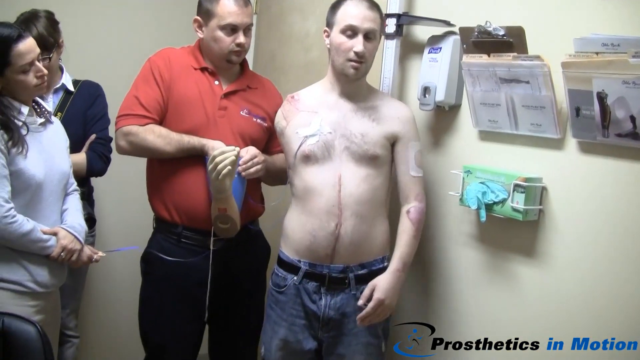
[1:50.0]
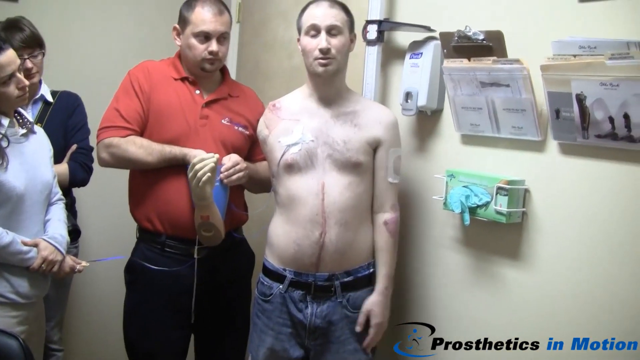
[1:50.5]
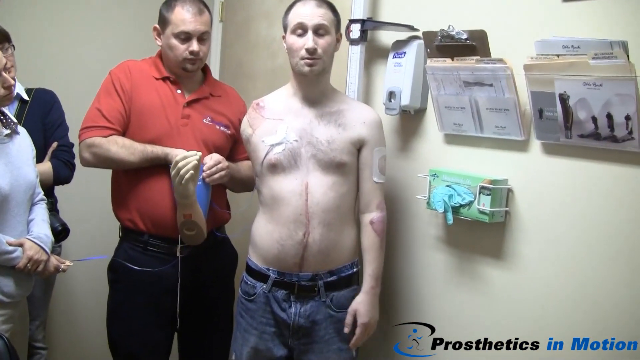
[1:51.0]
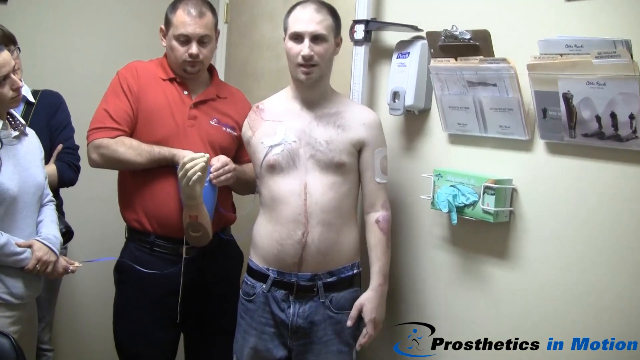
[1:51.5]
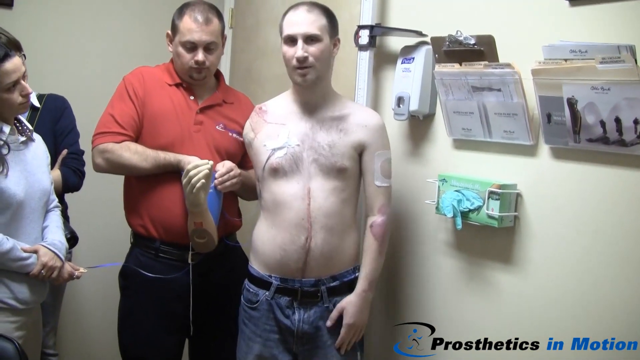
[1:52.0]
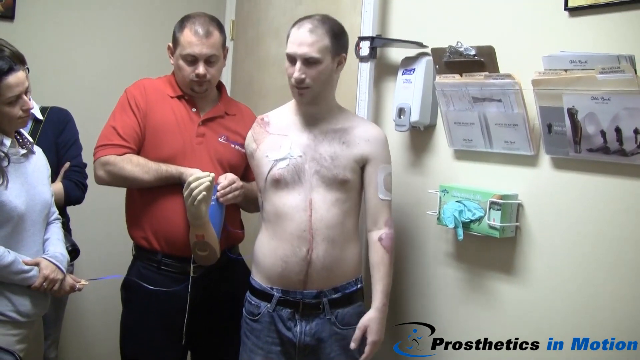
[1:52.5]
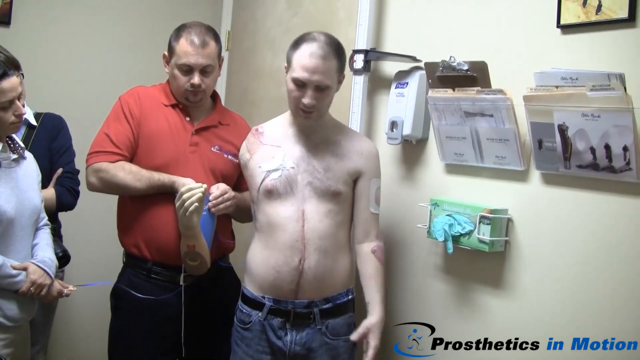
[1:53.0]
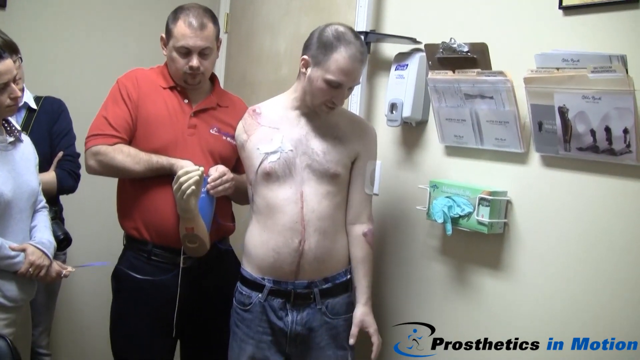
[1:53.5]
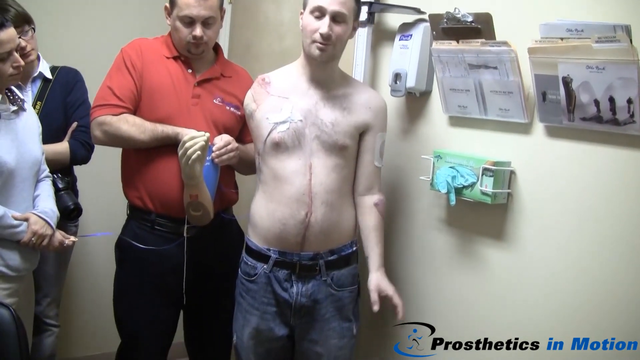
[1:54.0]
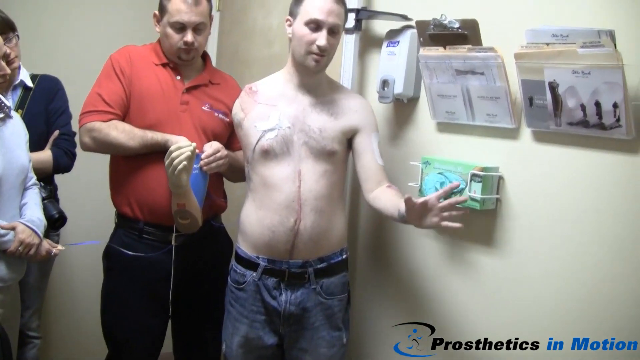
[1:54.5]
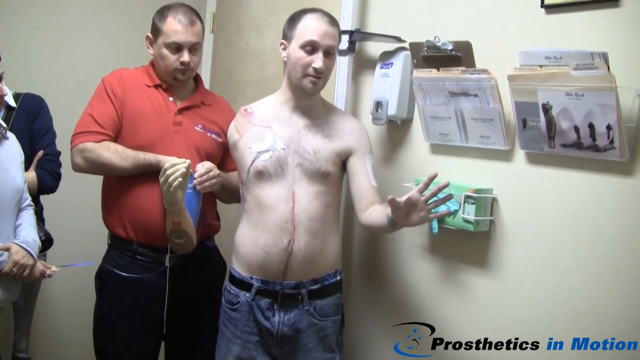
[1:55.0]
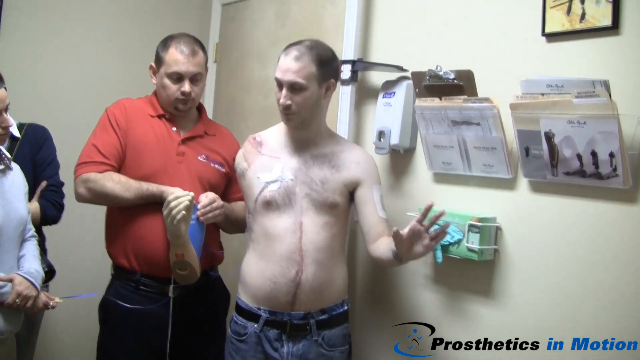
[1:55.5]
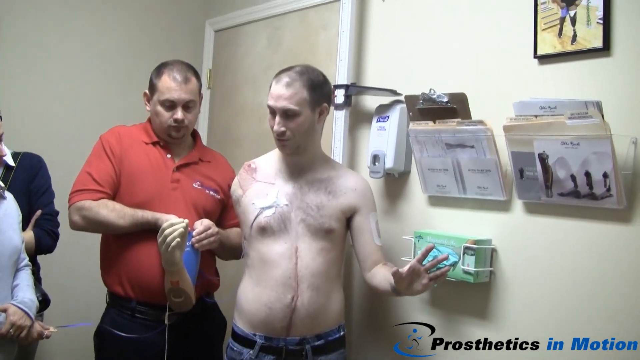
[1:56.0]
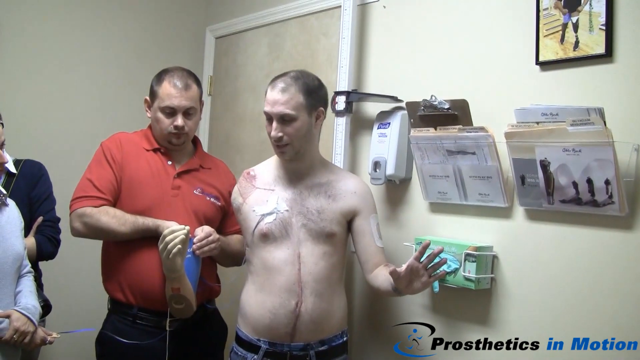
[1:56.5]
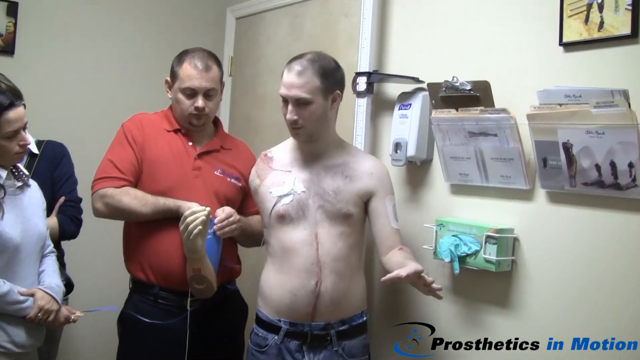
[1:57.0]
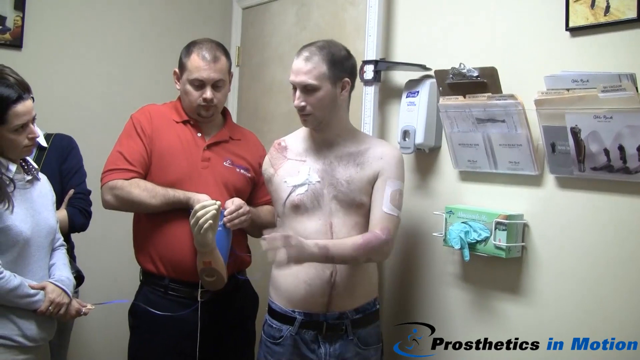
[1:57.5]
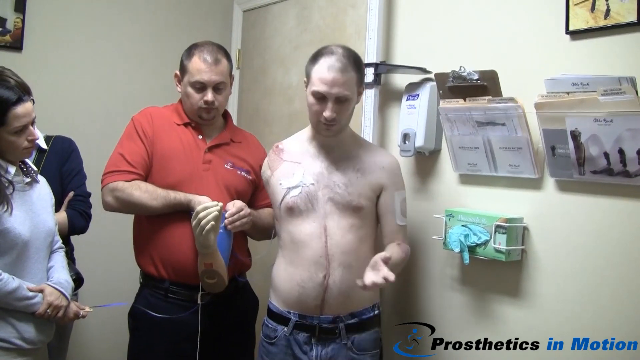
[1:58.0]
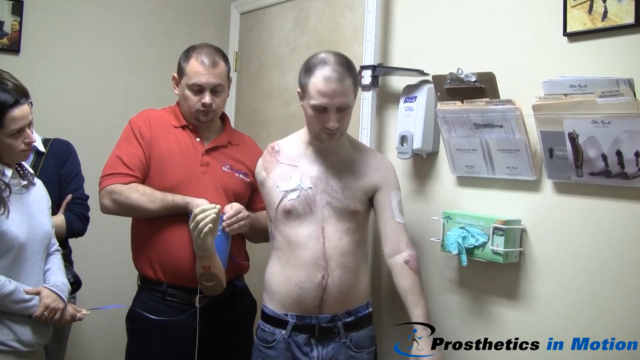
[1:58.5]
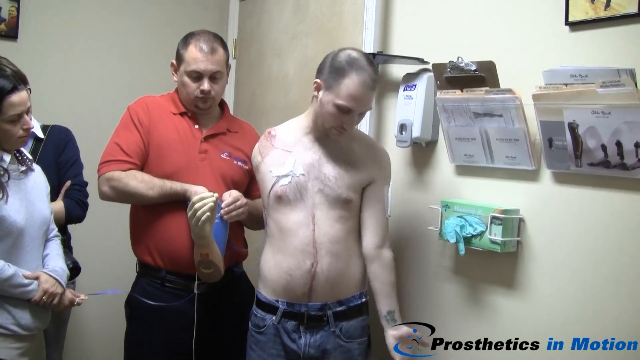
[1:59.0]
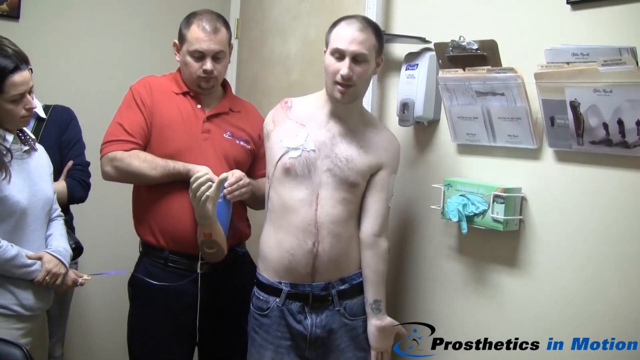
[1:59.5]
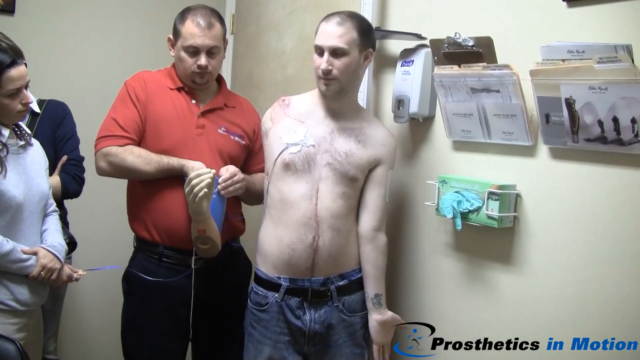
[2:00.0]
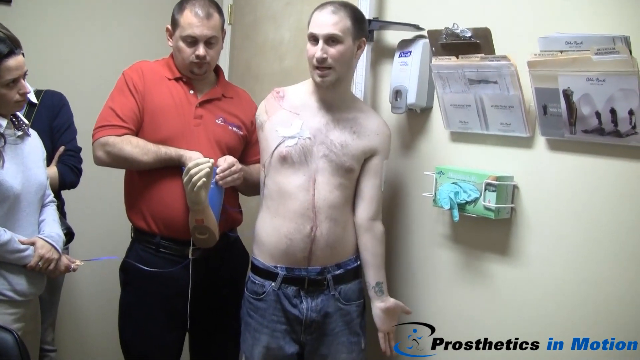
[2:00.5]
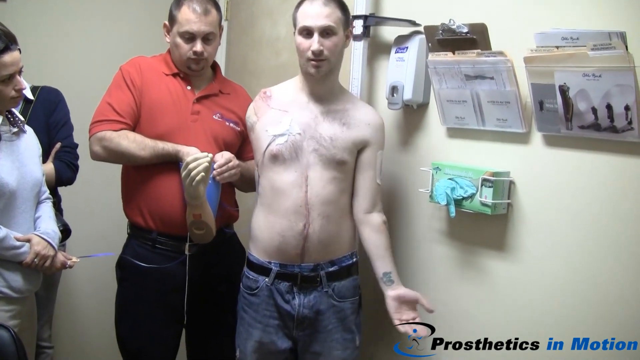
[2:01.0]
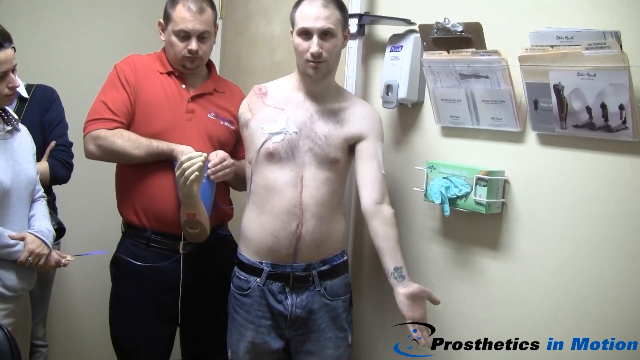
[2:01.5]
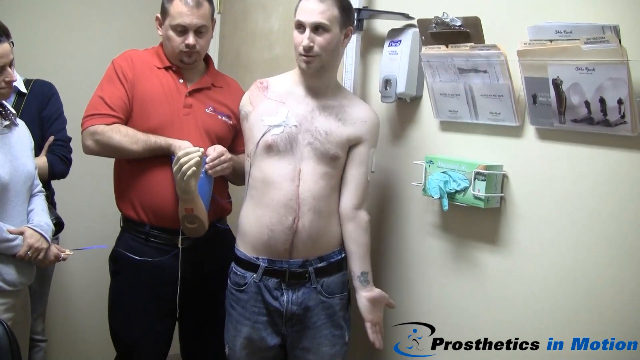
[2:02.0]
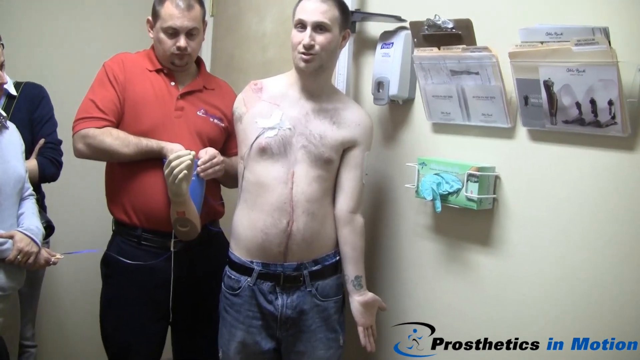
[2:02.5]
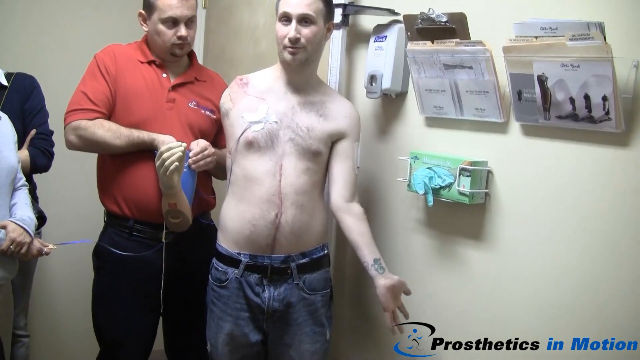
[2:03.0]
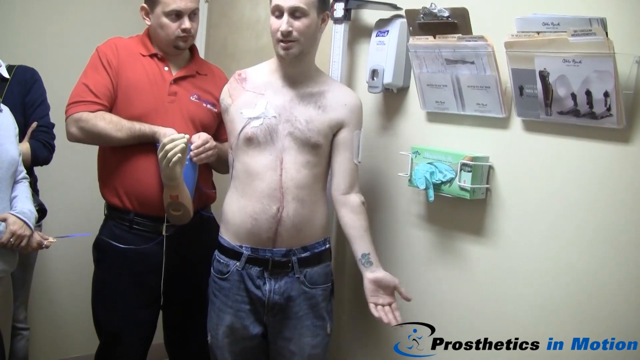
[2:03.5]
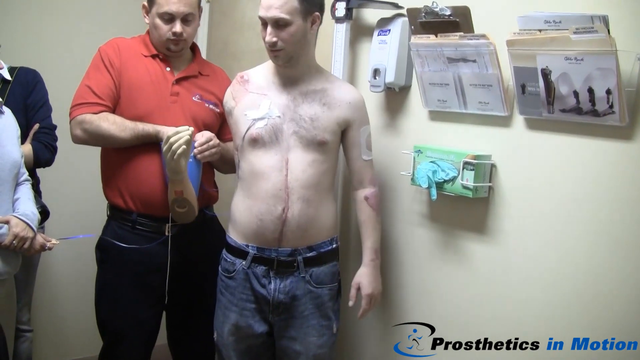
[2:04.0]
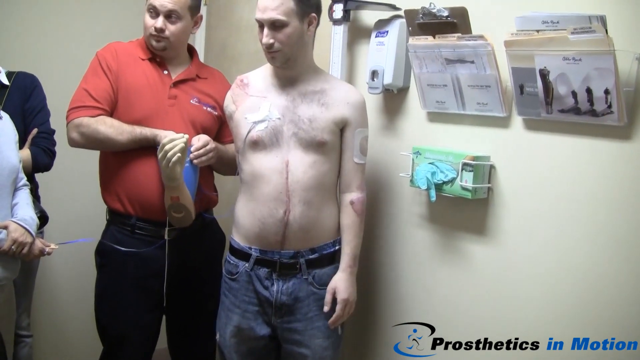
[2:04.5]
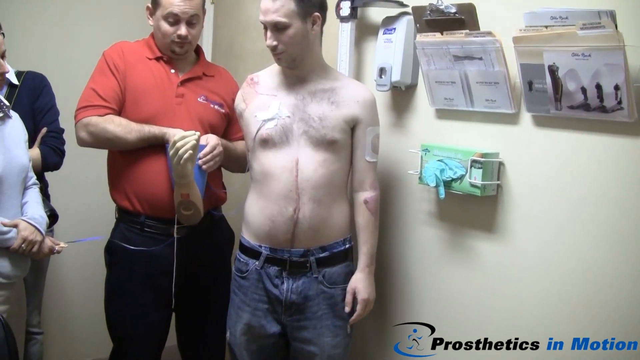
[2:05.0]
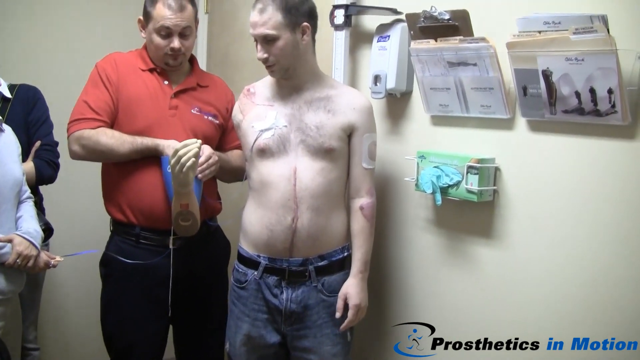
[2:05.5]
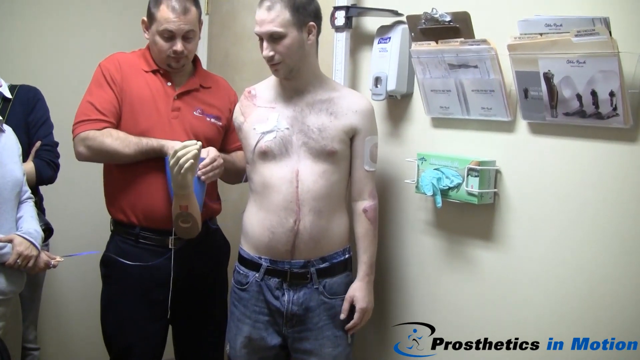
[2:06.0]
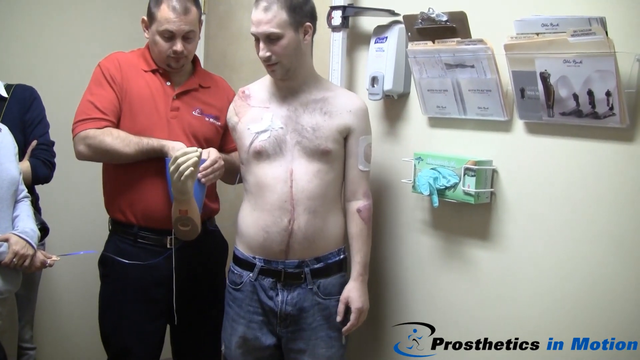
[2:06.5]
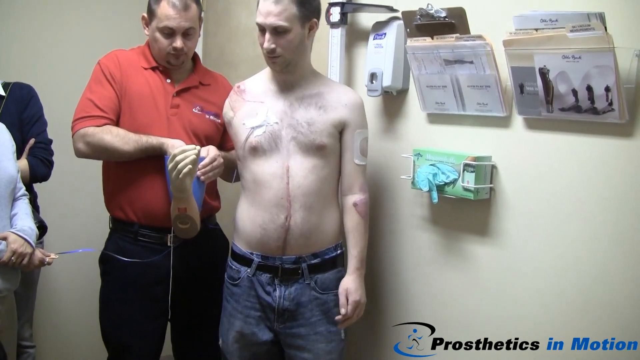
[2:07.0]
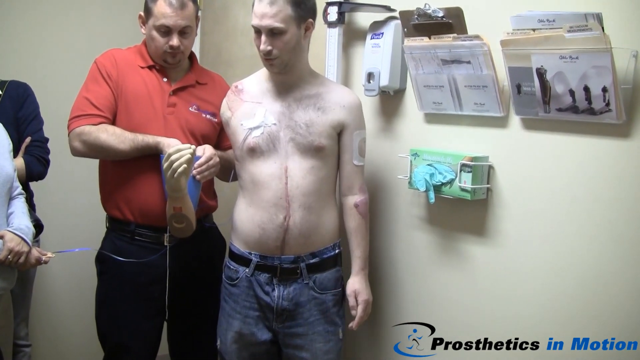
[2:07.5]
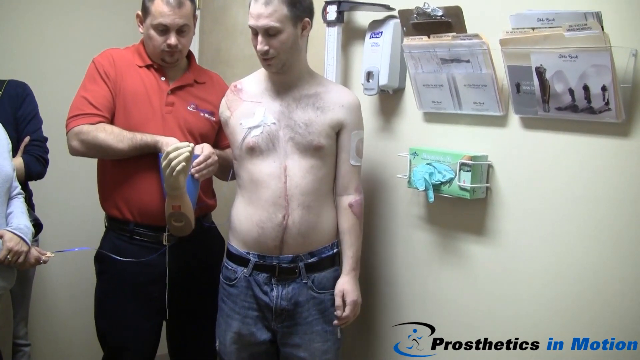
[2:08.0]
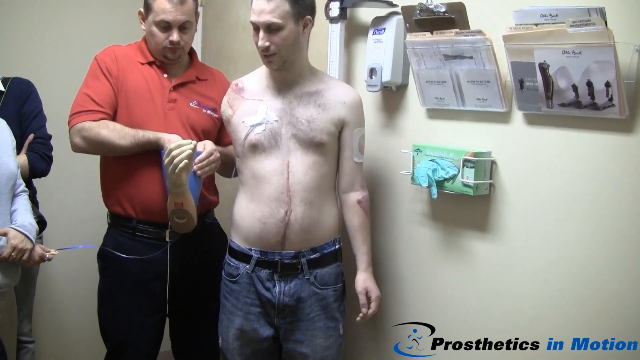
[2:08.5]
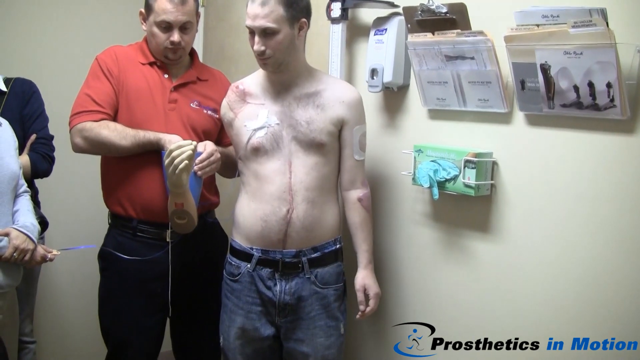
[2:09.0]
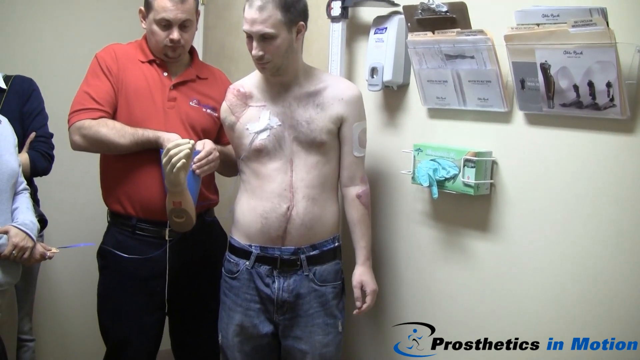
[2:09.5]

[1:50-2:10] The patient stands against the wall in the doctor's office, and his right shoulder with the amputation is visible. A member of staff in a red t-shirt holds the prosthetic arm, which has a blue top. A woman with long black hair looks on, and a further woman with glasses and a blue jumper is stood behind her. The patient talks, moving his left arm. He has a large scar running down from his lower chest to his trouser line. He gestures with his left arm out to the side, spreading his fingers as he talks, then motions over towards the prosthetic arm and back down to his left arm. The member of staff in the red t-shirt appears to have his right hand inside the blue top of the prosthetic arm; what he is doing cannot be seen.